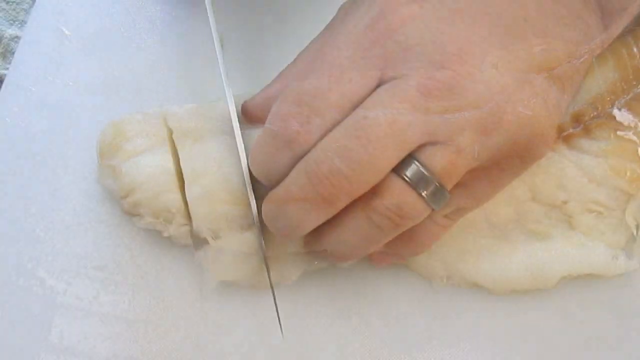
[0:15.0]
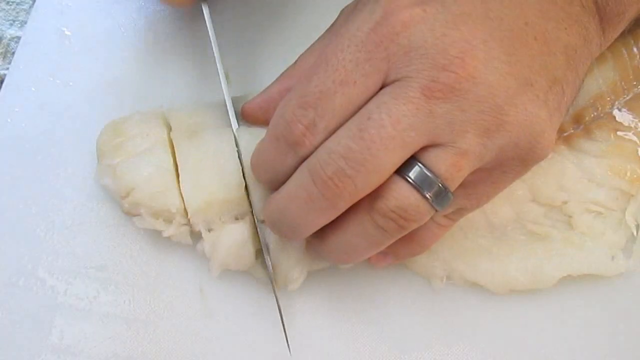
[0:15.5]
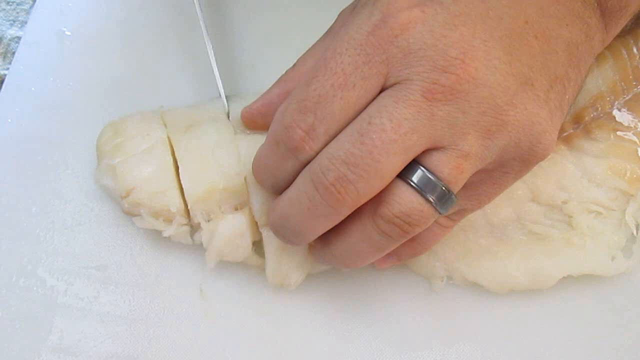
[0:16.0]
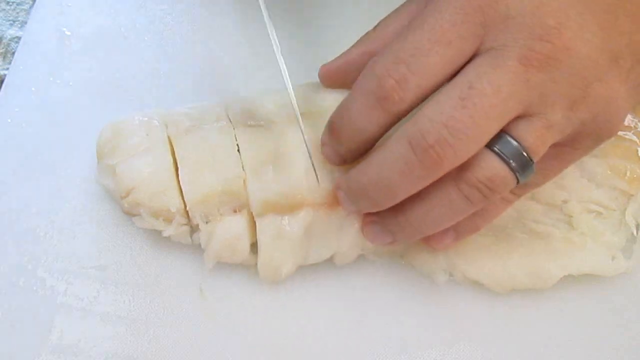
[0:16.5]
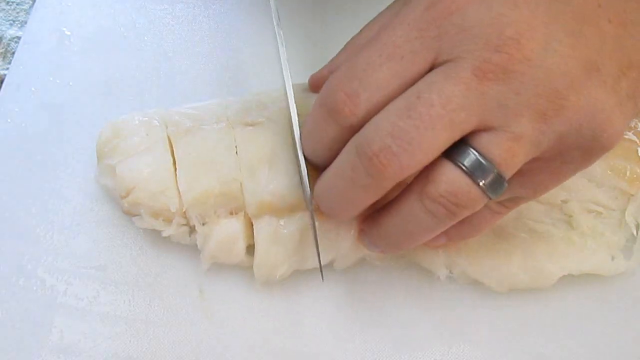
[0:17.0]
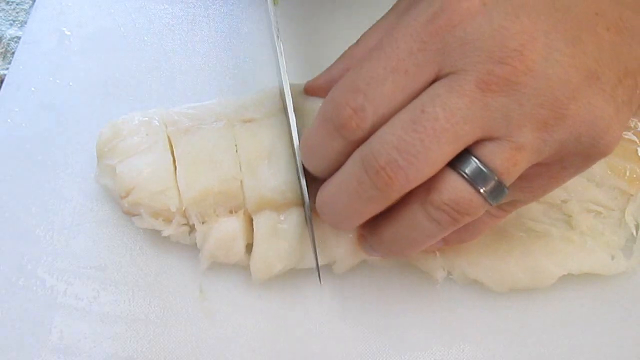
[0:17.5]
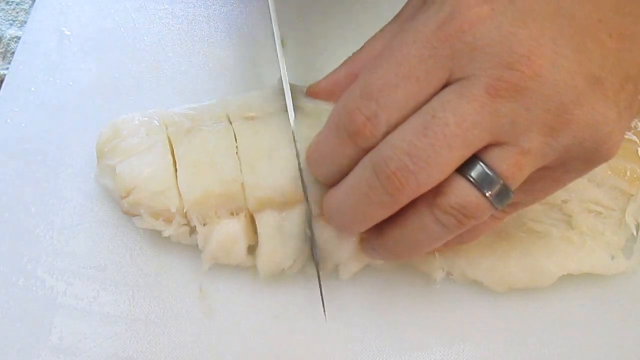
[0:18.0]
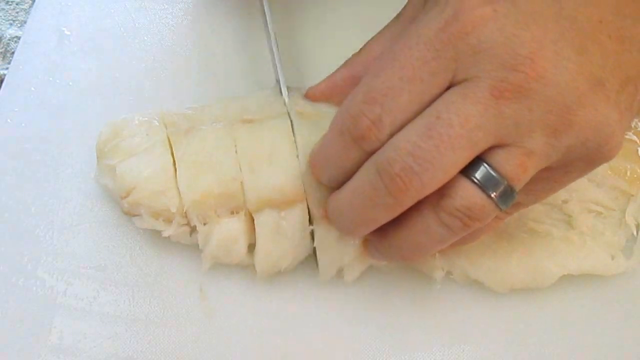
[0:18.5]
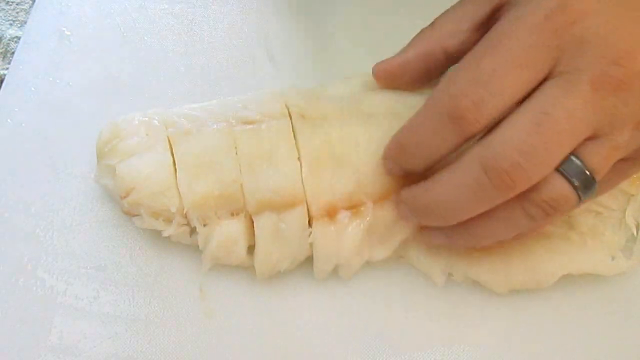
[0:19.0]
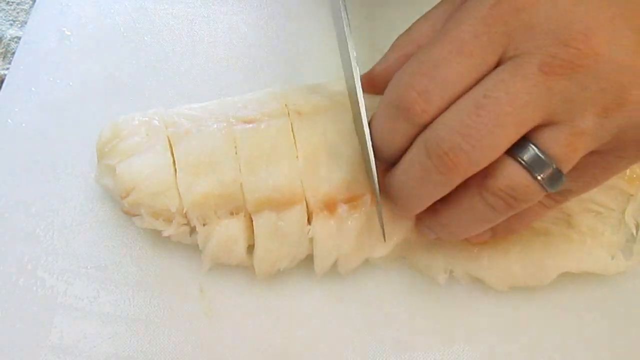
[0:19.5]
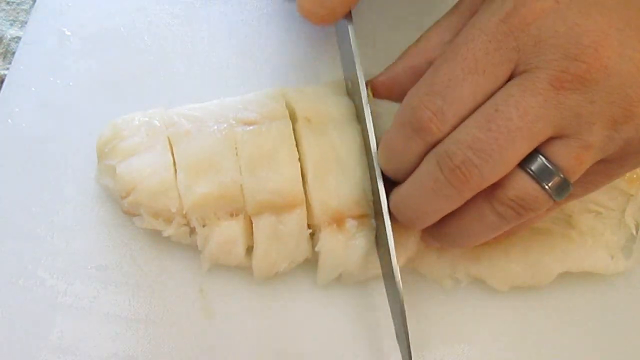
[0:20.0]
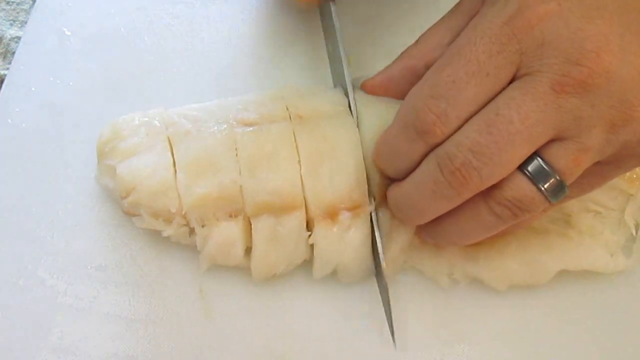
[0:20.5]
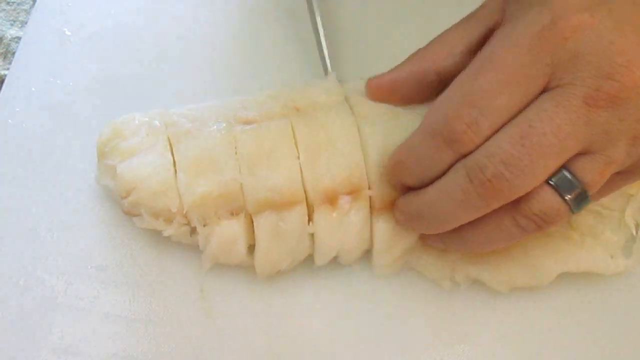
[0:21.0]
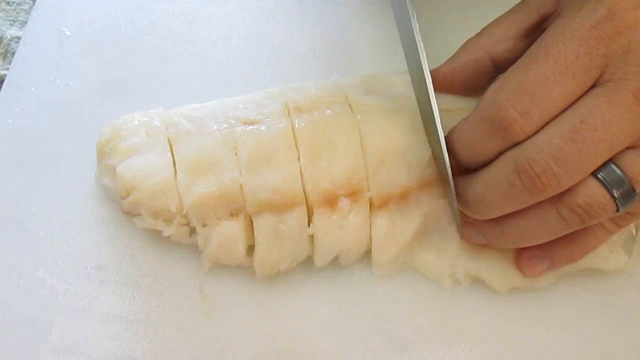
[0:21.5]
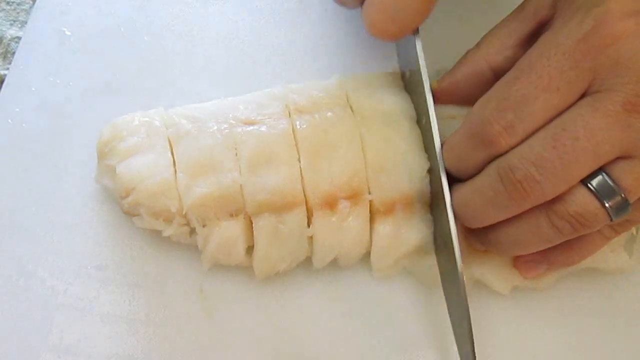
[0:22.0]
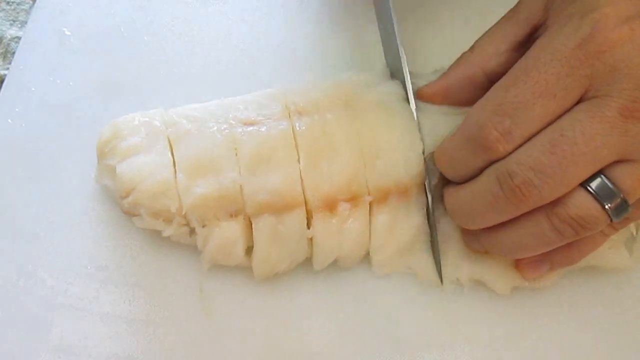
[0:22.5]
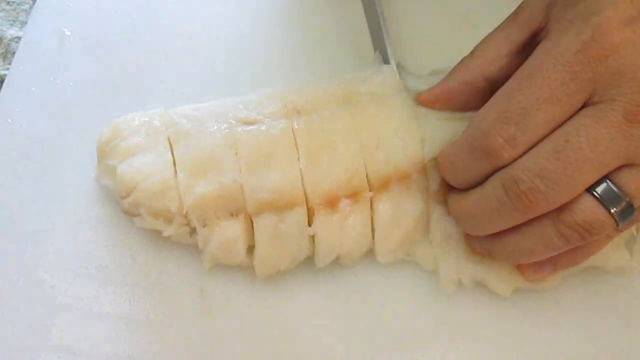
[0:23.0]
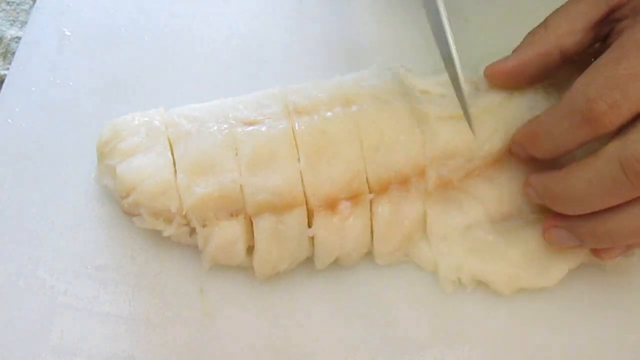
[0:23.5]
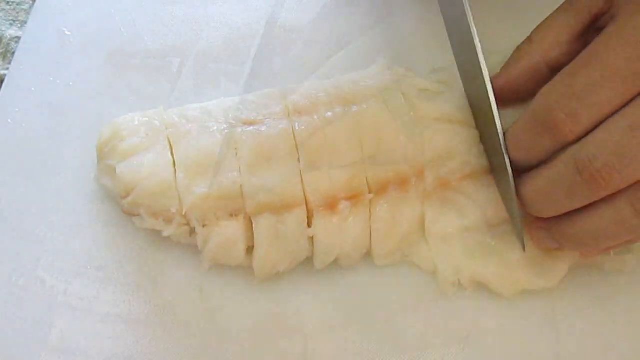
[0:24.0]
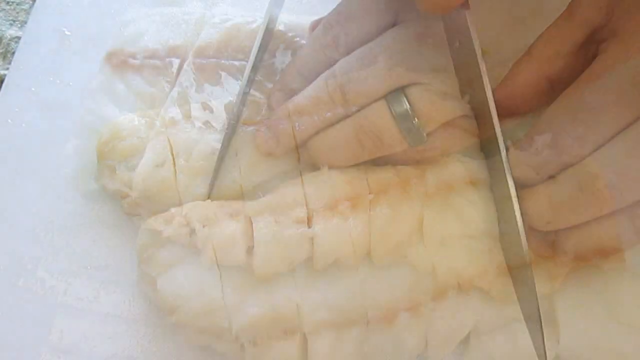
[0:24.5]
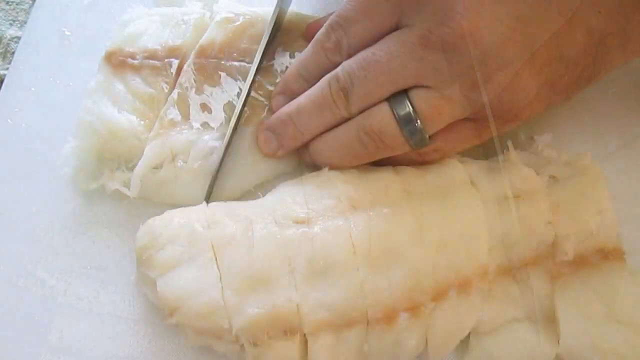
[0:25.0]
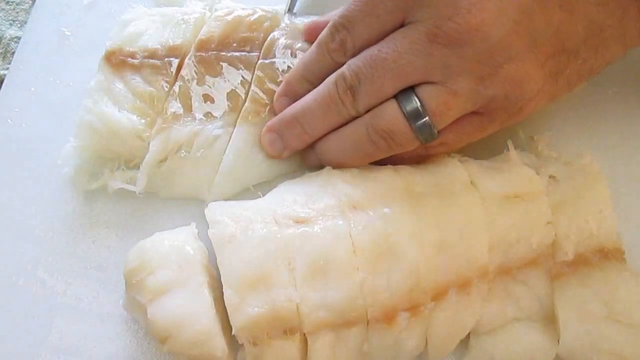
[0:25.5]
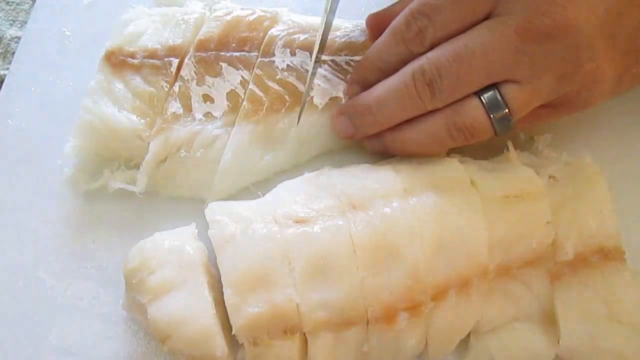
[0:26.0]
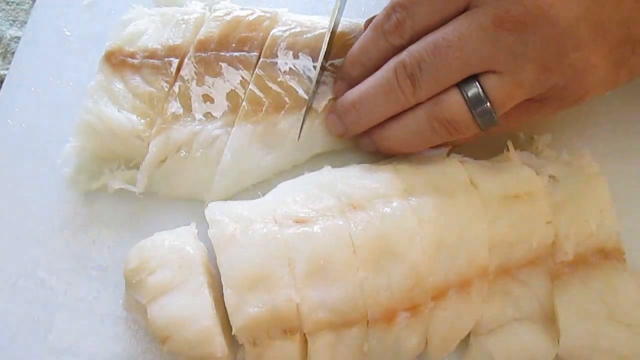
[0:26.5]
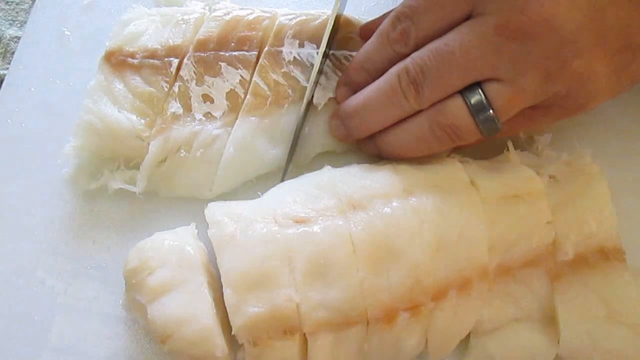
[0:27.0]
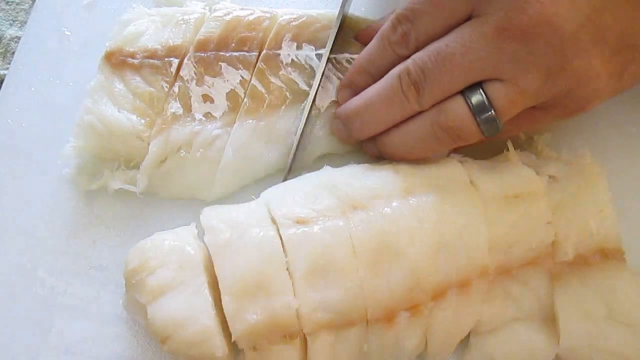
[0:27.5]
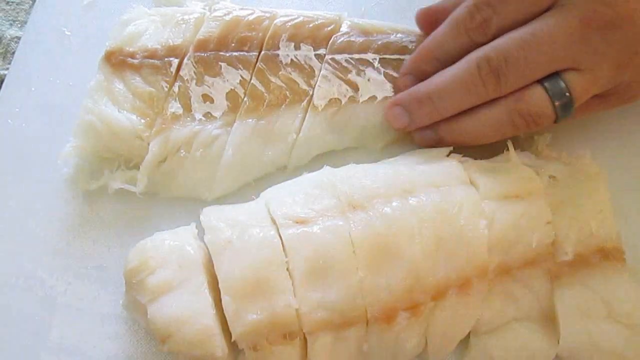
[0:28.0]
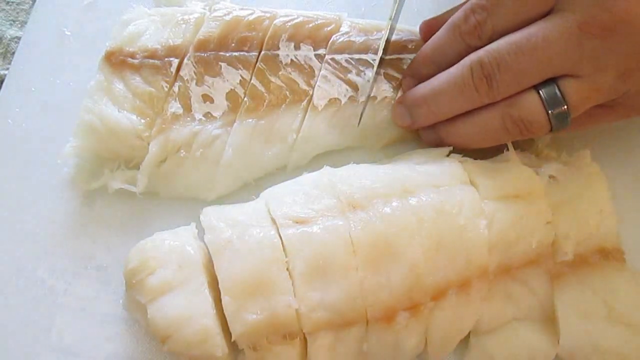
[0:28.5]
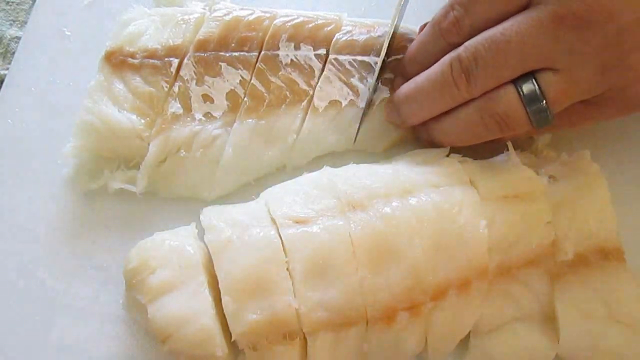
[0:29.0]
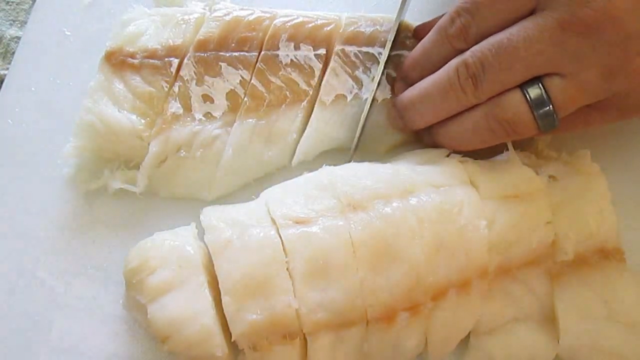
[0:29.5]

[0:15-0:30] A piece of fish is being cut on a white cutting board. It has already been cut in half lengthwise, separating a top portion from a bottom portion. The top portion is the wider piece and mostly white; the narrower bottom portion has a brown portion down its middle. The top portion is cut into about eight pieces about one inch wide, and the bottom portion is cut into the same one-inch pieces, about six of them. The right hand holds the knife, which looks about six inches long, and wears a platinum wedding band about a quarter of an inch thick.